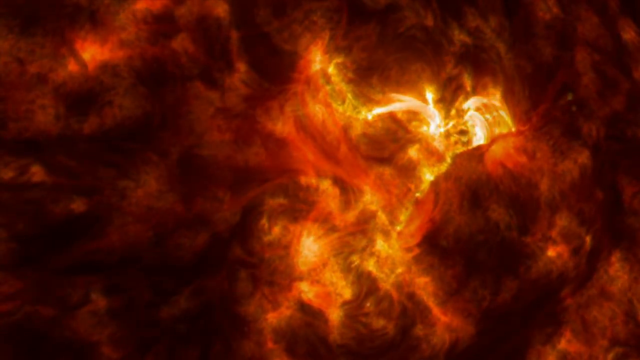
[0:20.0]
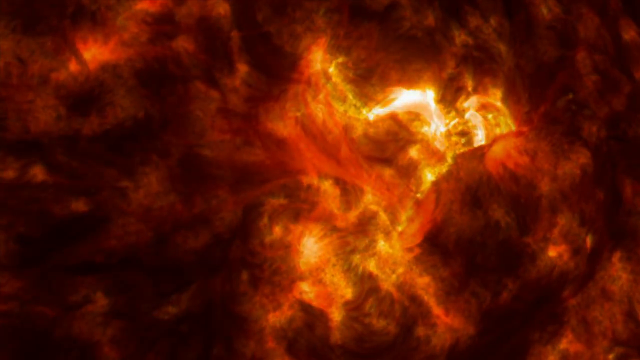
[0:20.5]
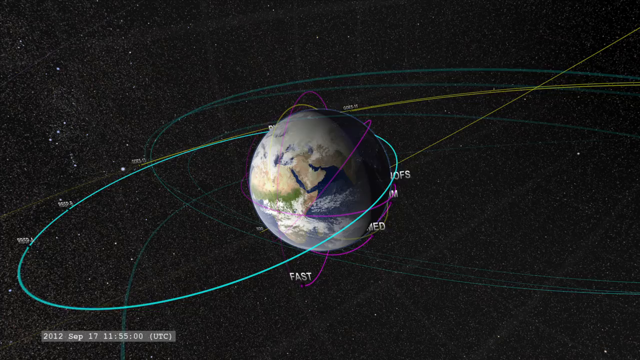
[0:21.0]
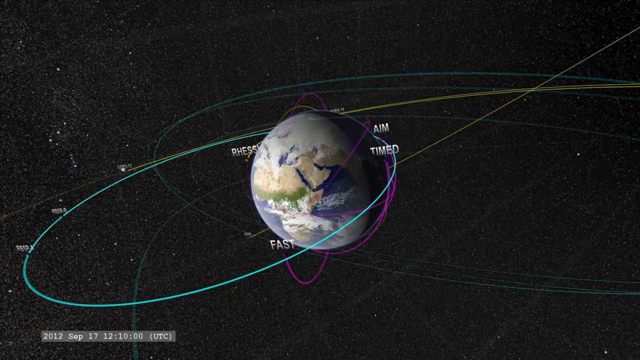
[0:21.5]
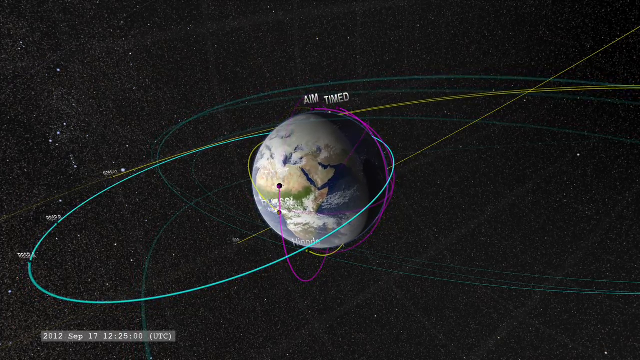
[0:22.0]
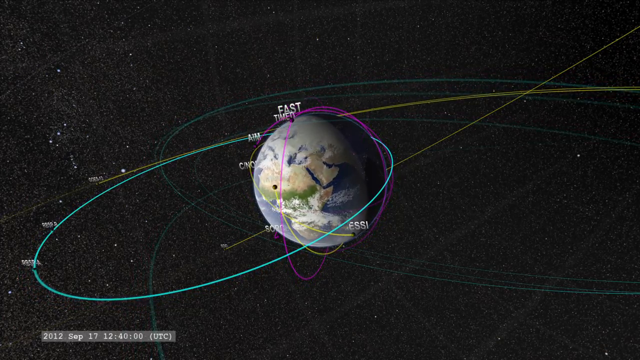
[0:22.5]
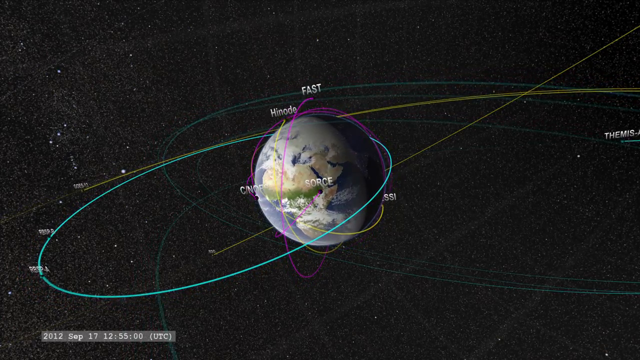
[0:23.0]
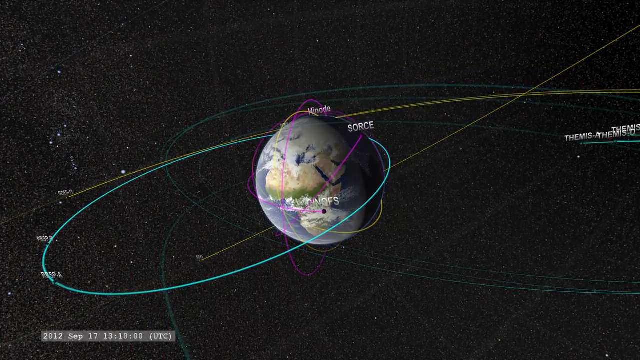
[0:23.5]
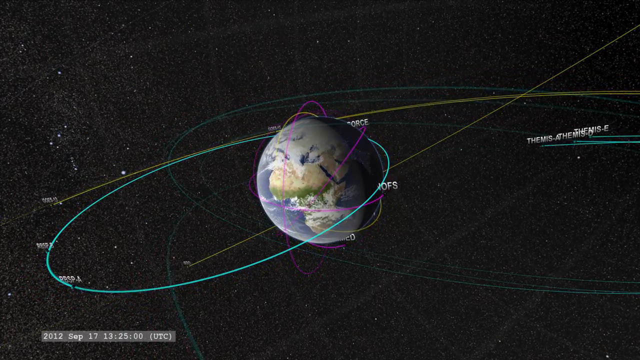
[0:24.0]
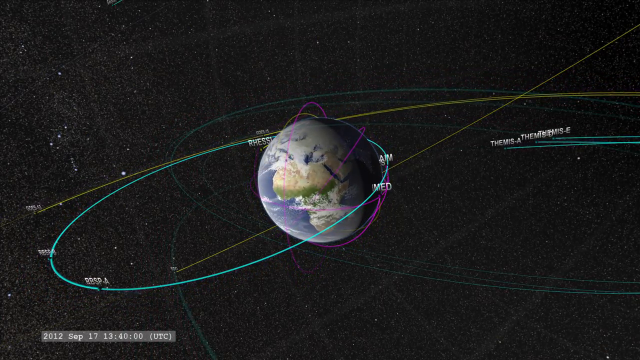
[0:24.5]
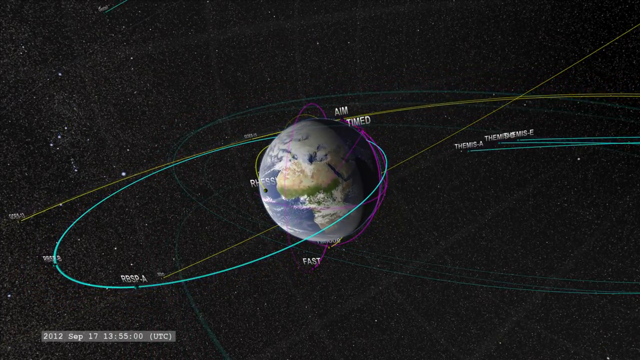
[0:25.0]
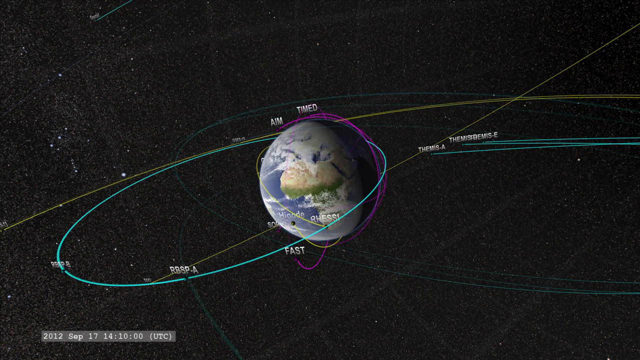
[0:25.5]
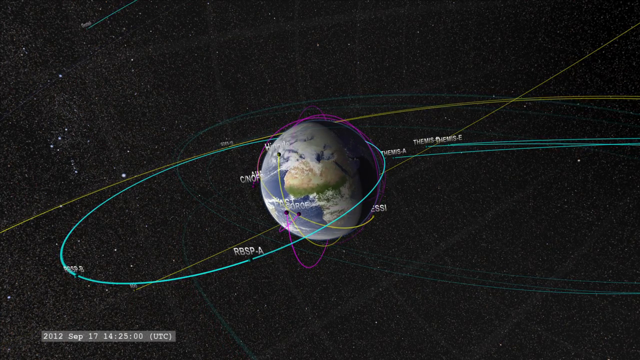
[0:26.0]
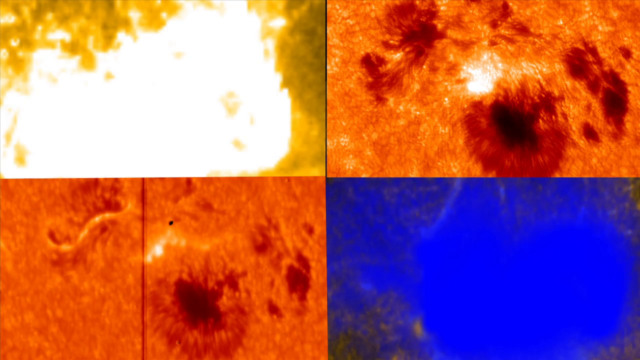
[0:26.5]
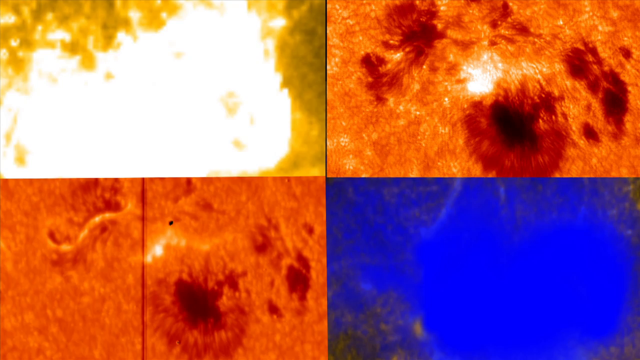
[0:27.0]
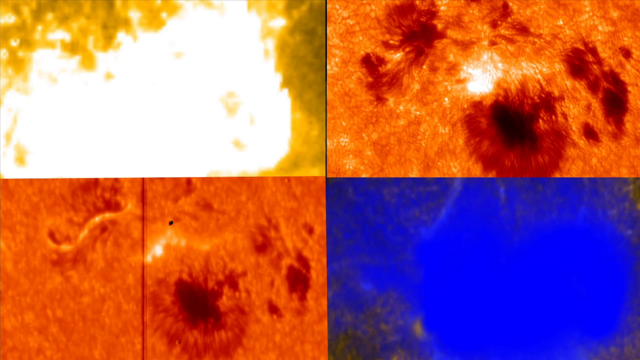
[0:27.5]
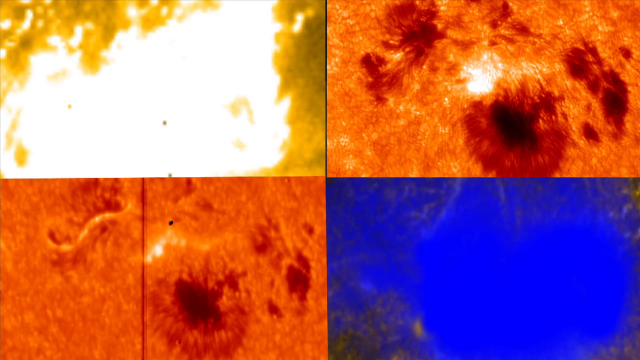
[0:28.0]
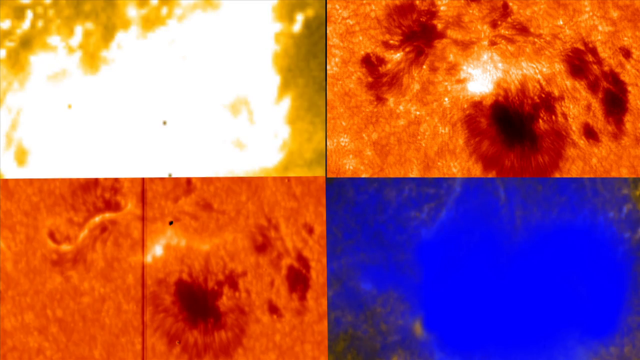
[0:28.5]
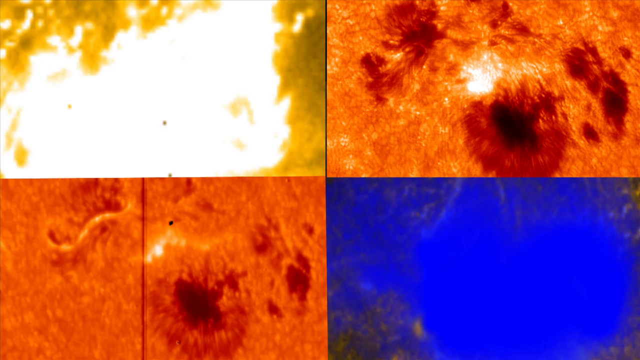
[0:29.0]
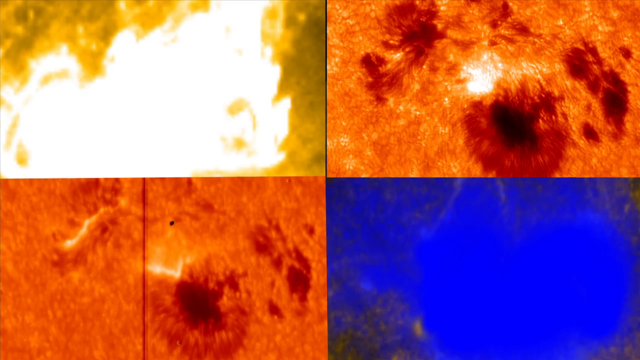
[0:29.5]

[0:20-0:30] After a close-up of the Sun, a diagram of the Earth appears, slowly rotating, with satellites rotating around it, traced with different colored lines. Most of the lines are blue, some are purple and some yellow, with more yellow lines in the back and a blue line or blue circle around the Earth. The background is black with many white speckles representing stars. Africa is visible on the Earth, with green and brown land, white clouds and the blue ocean around them. Text on the screen follows the lines, reading things like "FAST" and "TIMED", with more text in the back that is hard to read because it is small. A timer and a date are in the bottom left corner. Then a shot of four squares appears. The first has bright white light that is yellowish around the light. The second is orange with some dark orange patches and some white patches. The third is also bright orange with a few dark orange patches and a few white patches. The fourth shows something blue with some yellowish patches around the edges; it is not clear what it is supposed to be.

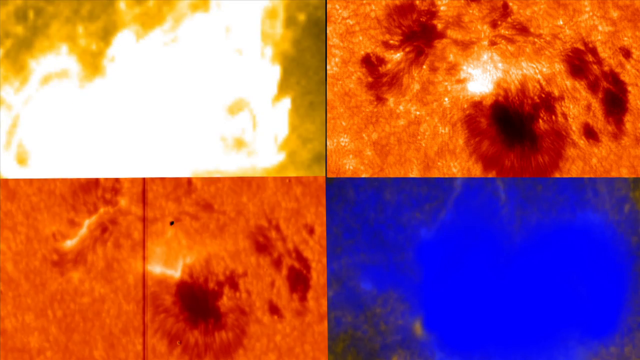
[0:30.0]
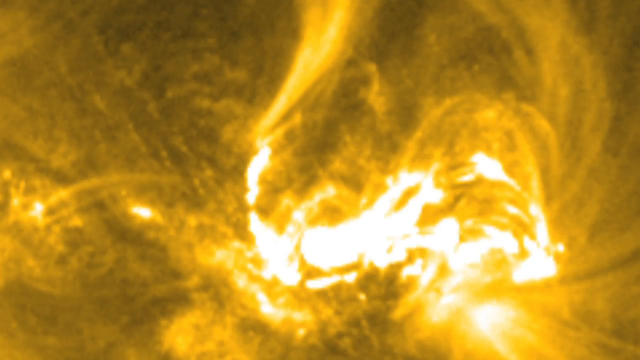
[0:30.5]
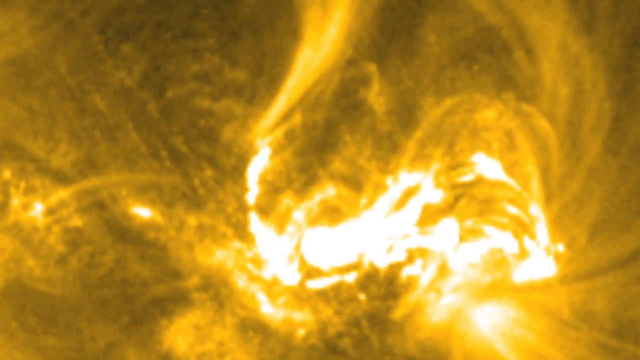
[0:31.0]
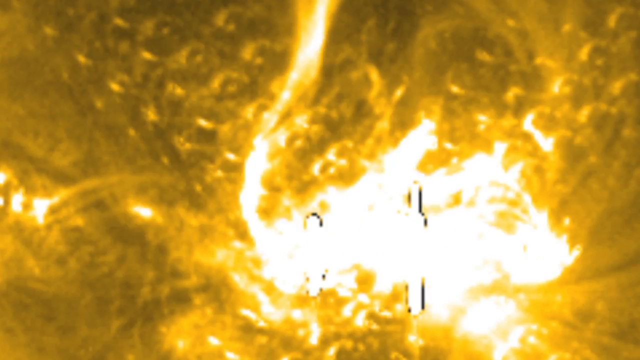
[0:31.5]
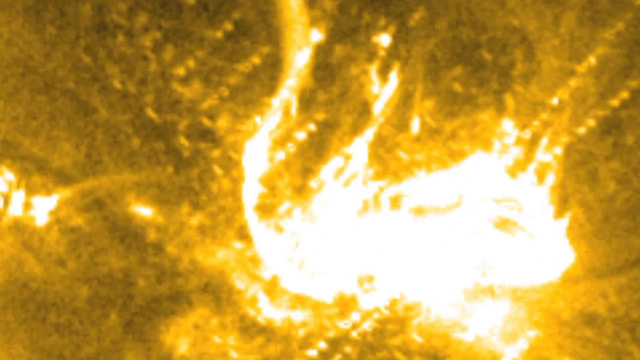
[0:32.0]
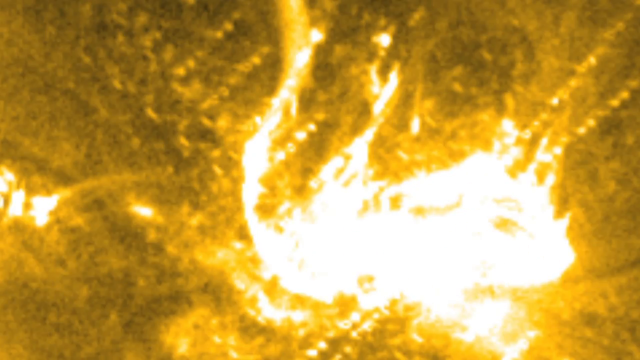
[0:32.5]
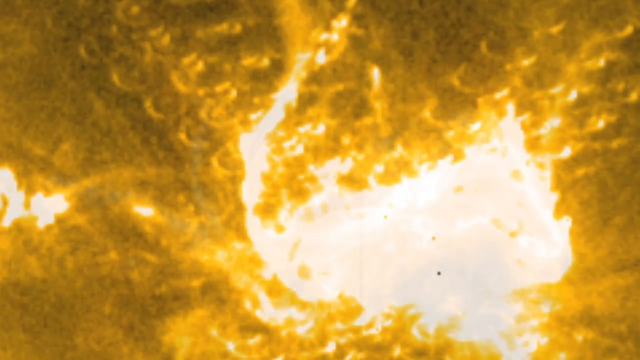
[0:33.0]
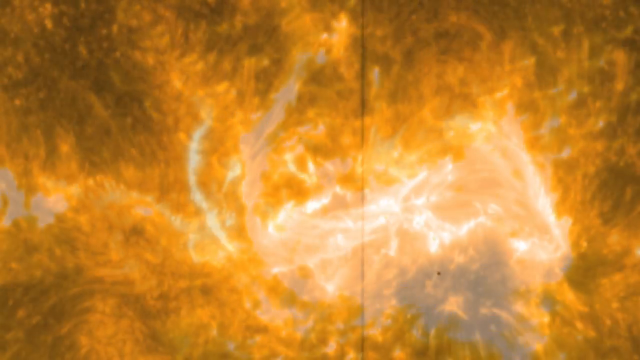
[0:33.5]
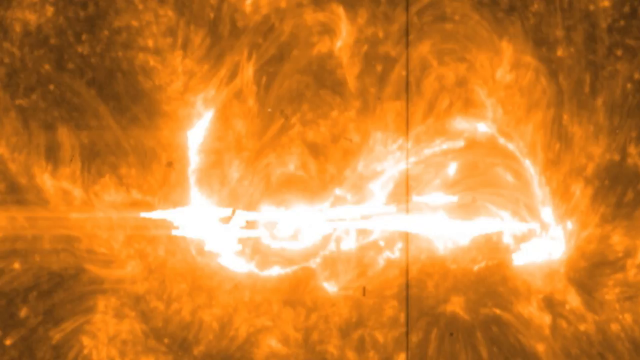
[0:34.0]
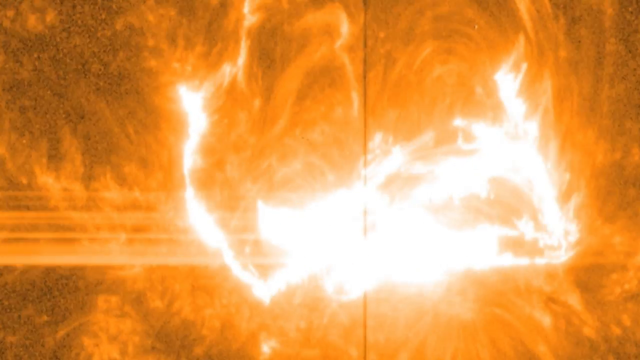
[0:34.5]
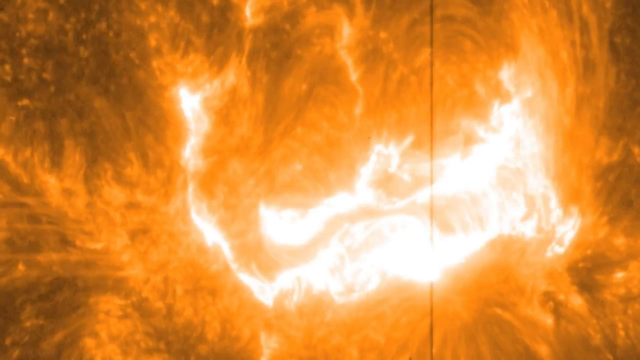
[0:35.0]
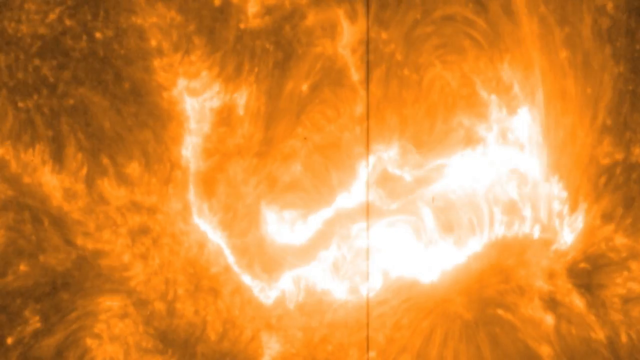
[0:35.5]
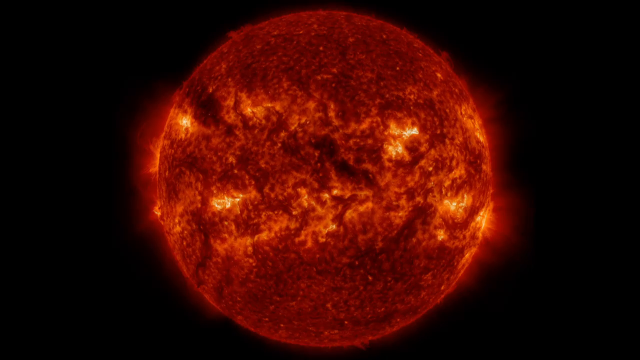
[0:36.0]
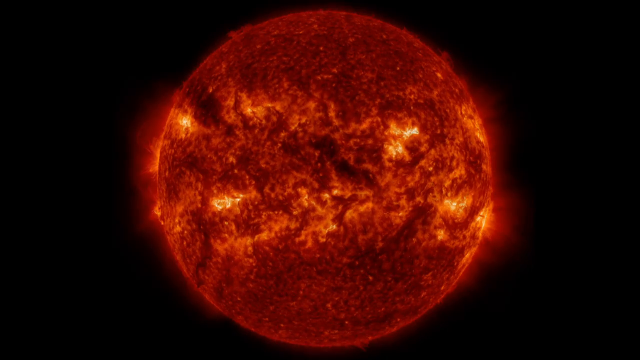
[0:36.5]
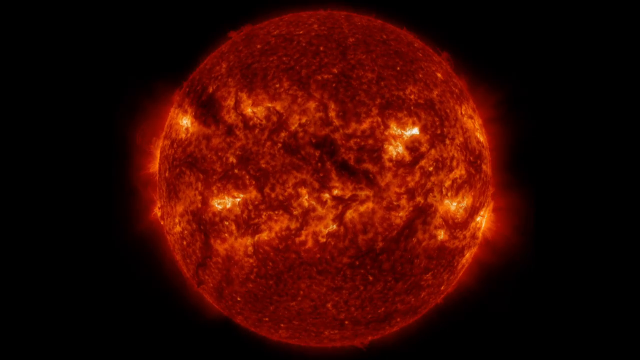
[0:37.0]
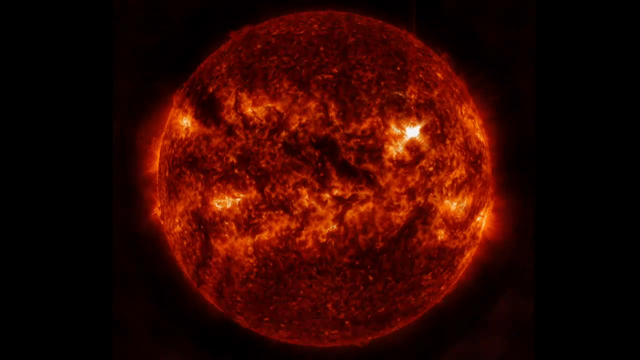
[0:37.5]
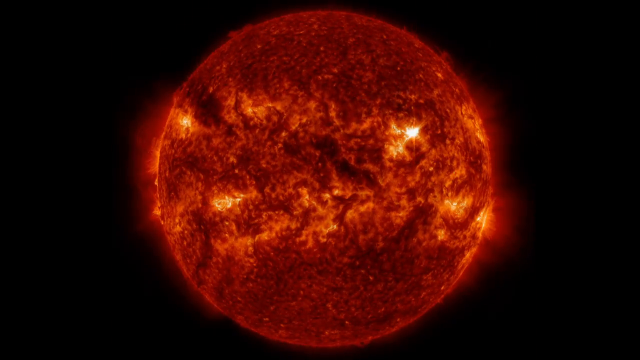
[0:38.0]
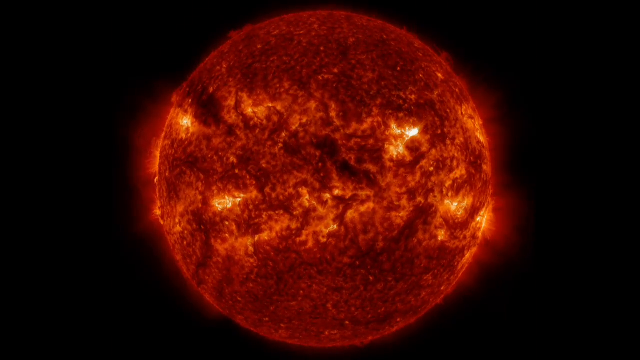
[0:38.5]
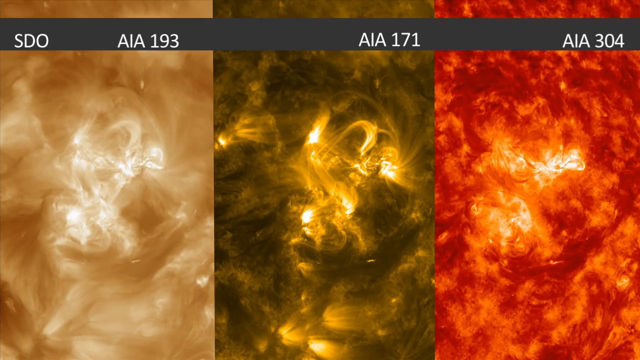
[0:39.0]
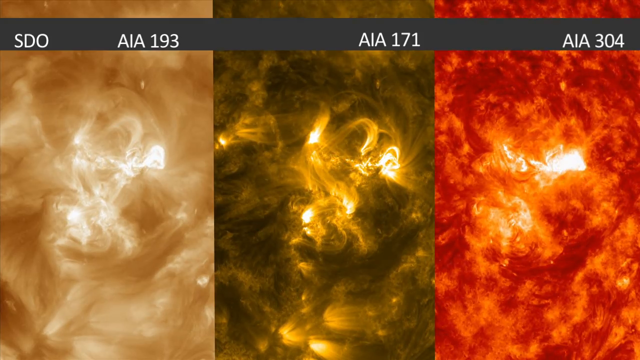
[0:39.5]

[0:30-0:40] The four squares are shown, followed by a slow-motion, very intense close-up of the surface of the Sun. It is bright yellow, with white patches slowly moving. Another close-up follows, this time bright orange with a white patch in the center that flares up; it might be a close-up of a solar flare. A line runs across the screen. Then a shot of the Sun itself shows a single solar flare in the top right section of the Sun. It flashes white for a moment, and the atmosphere appears to ripple across the Sun. The Sun is against a black background with no stars. It is very dark orange, with red flares around the edges, many dark black patches and red patches, dark orange, and a few yellow areas with white. Next, three solar flares are shown on the same screen, lined up together. The first is tan, one is kind of yellowish or dark green, and the third is orange, in bright and dark shades, with a white solar flare. Some kind of numbers or digits are at the top of the screen.